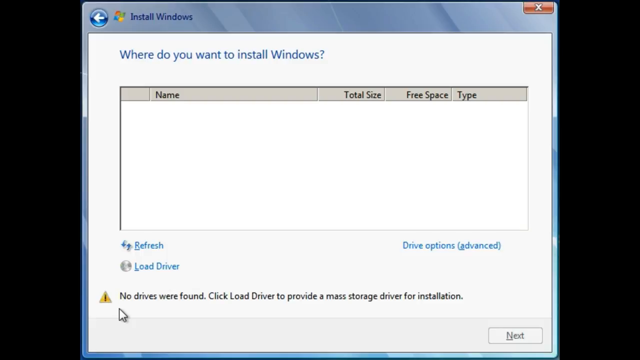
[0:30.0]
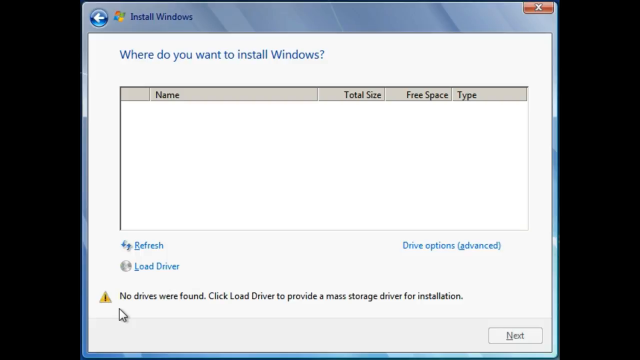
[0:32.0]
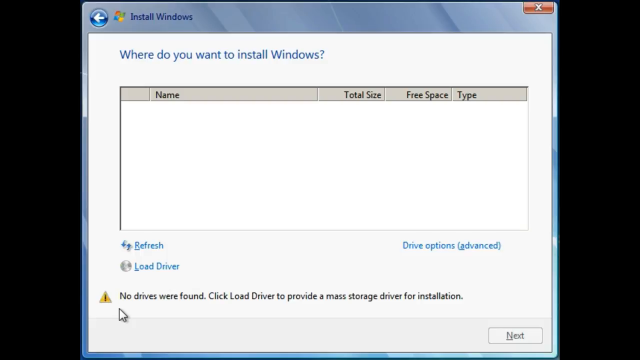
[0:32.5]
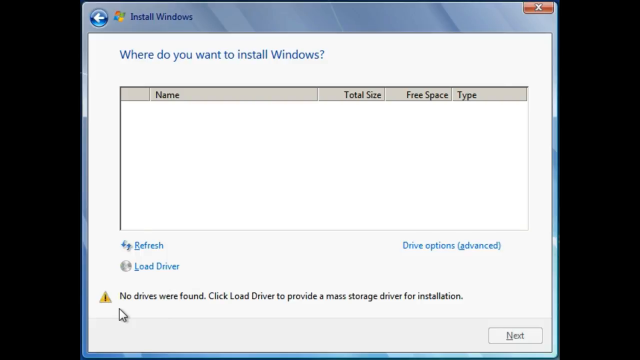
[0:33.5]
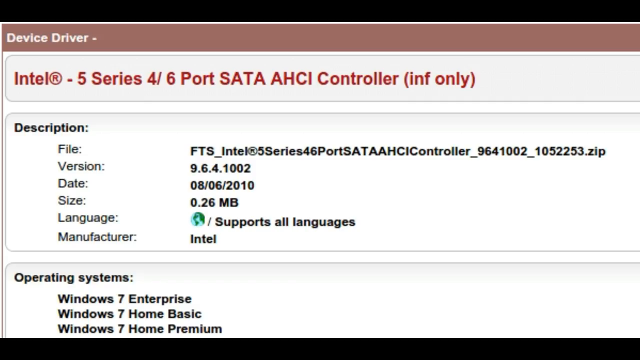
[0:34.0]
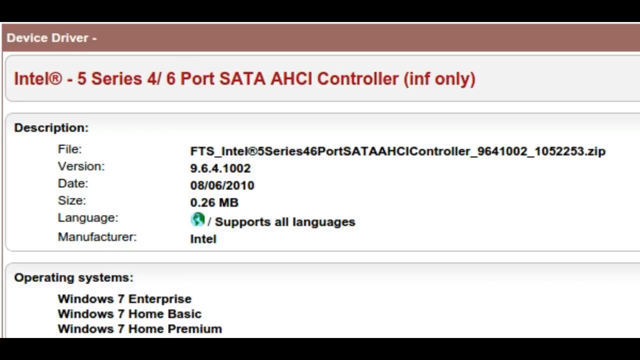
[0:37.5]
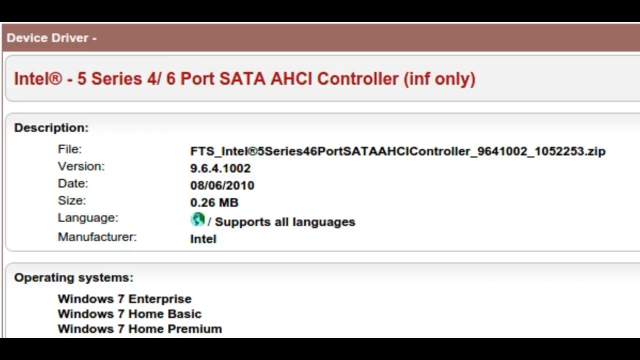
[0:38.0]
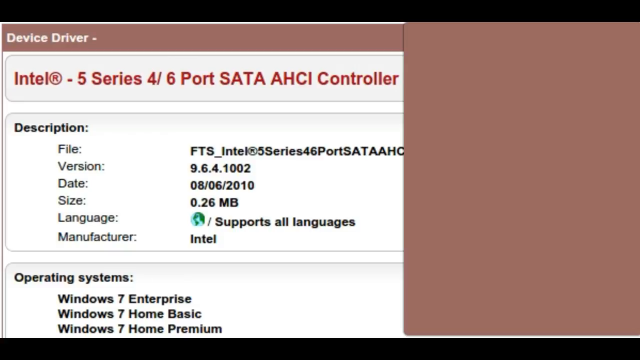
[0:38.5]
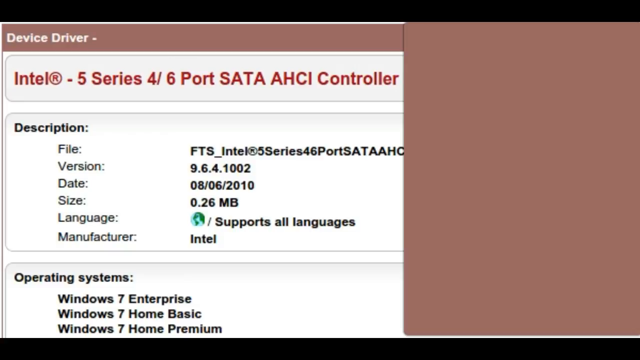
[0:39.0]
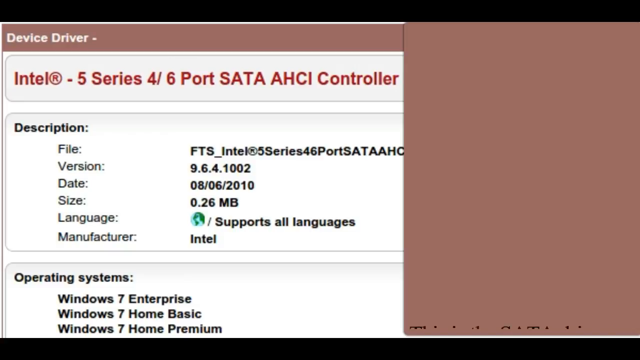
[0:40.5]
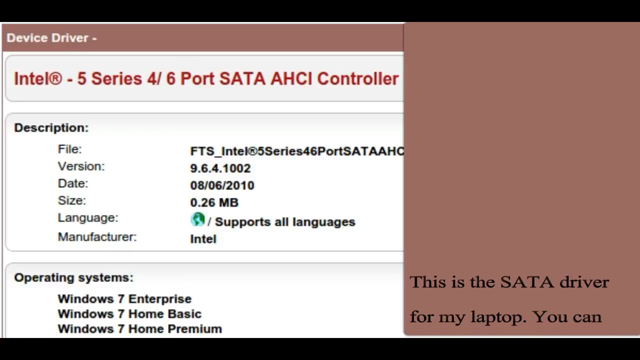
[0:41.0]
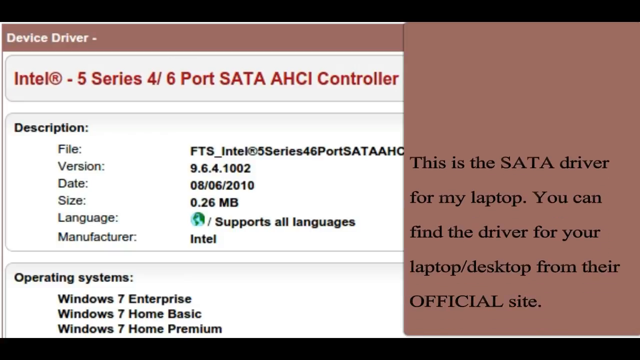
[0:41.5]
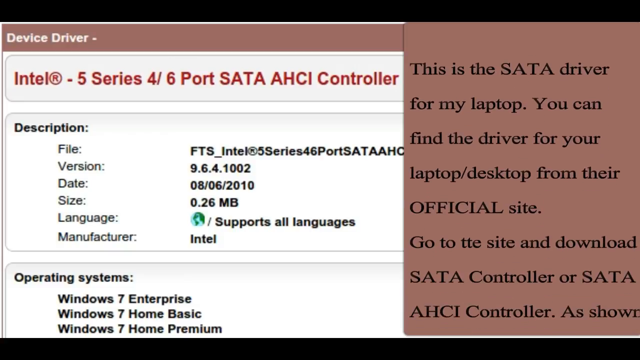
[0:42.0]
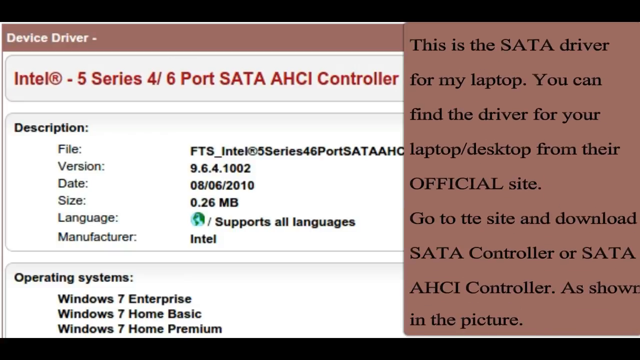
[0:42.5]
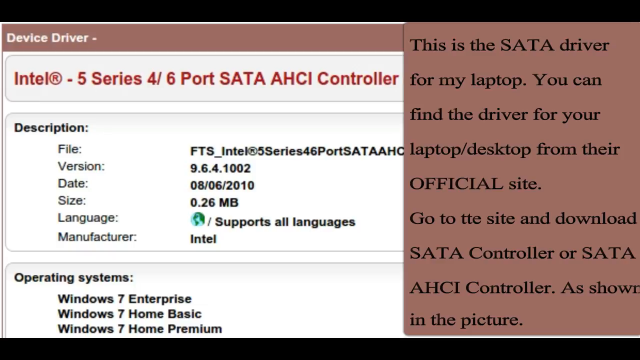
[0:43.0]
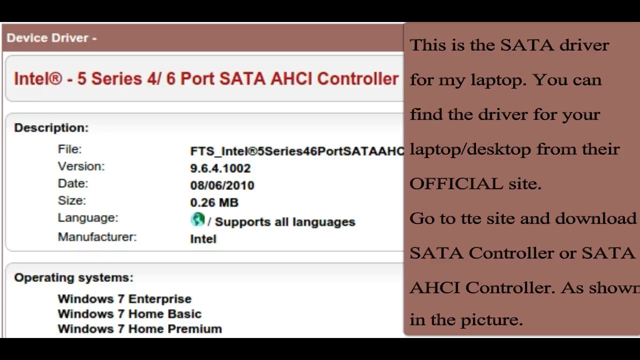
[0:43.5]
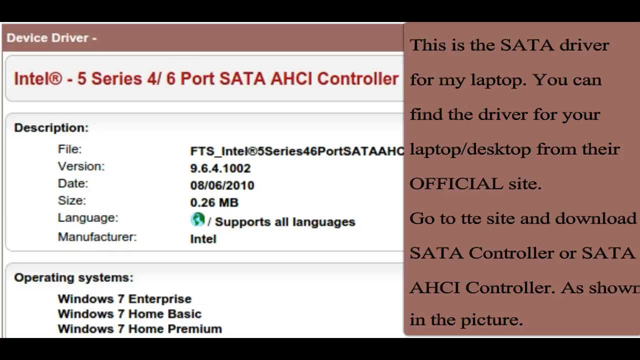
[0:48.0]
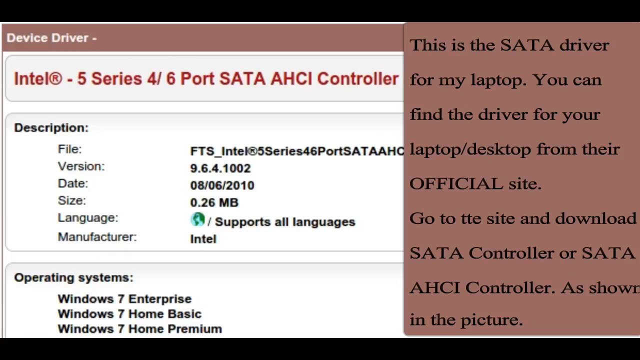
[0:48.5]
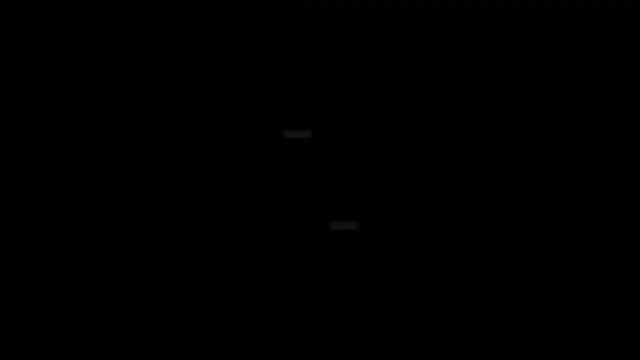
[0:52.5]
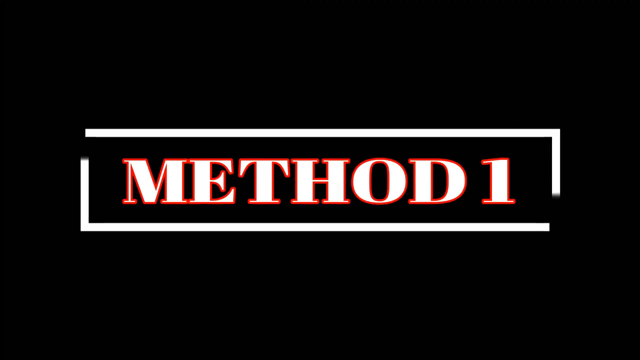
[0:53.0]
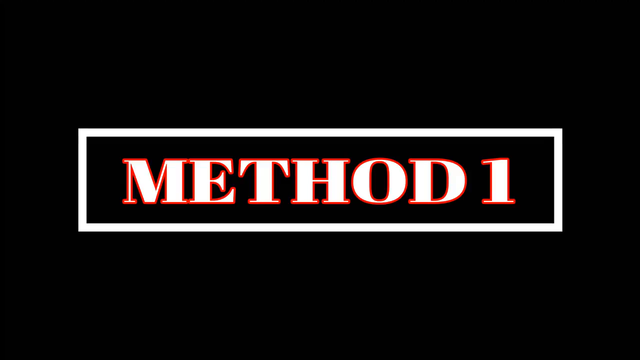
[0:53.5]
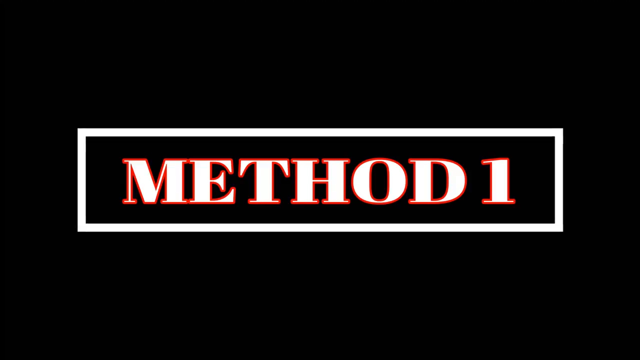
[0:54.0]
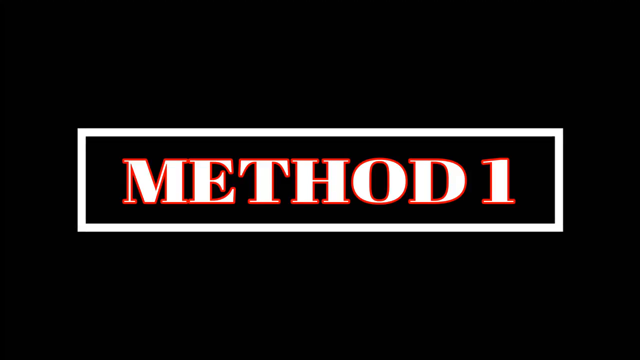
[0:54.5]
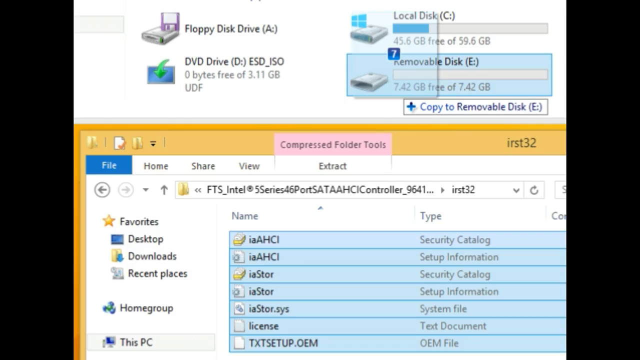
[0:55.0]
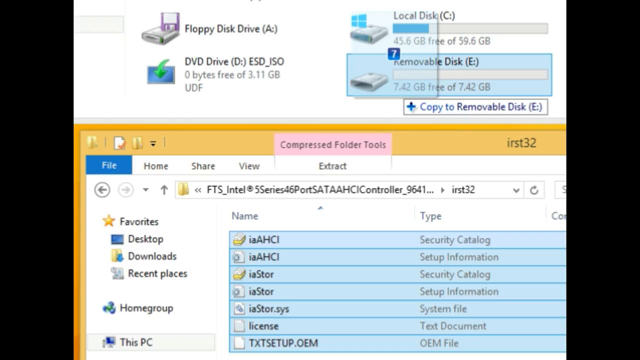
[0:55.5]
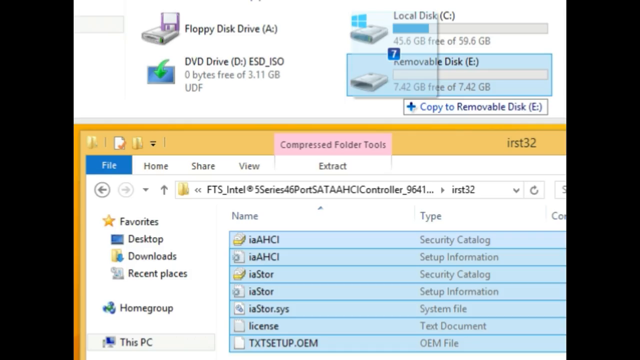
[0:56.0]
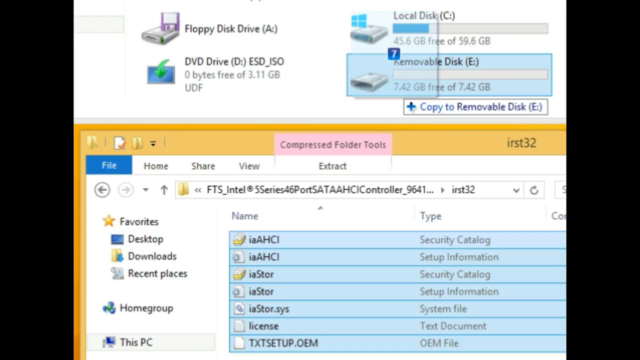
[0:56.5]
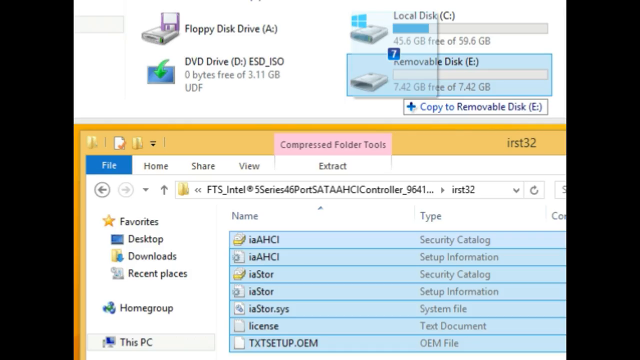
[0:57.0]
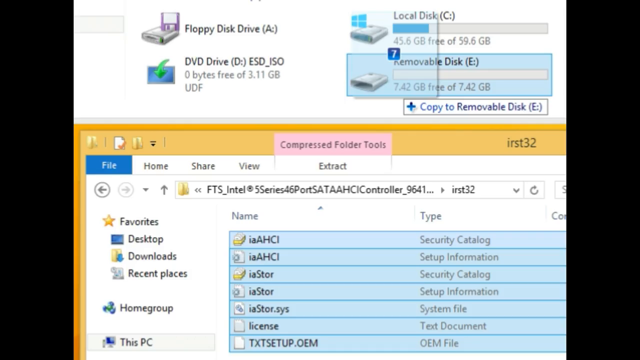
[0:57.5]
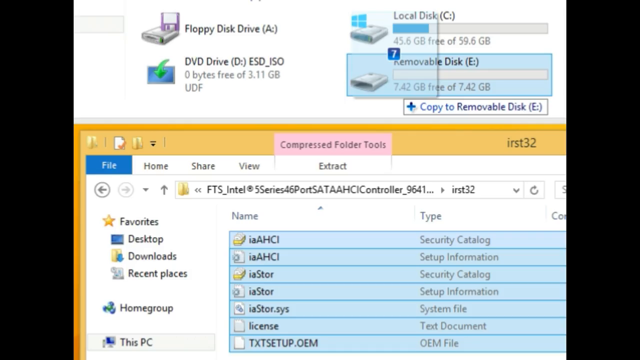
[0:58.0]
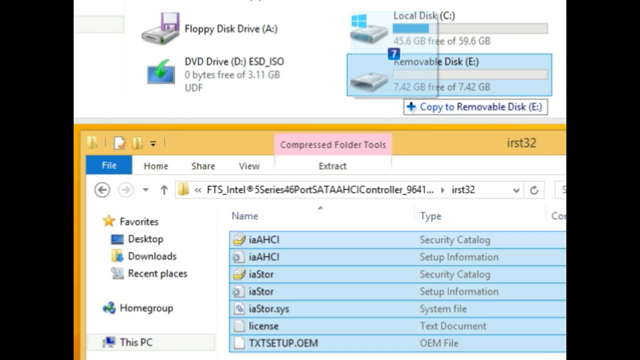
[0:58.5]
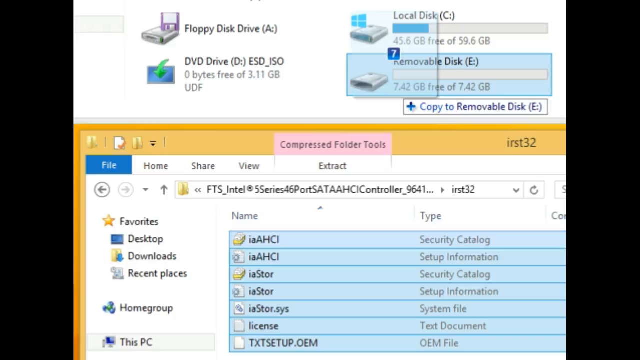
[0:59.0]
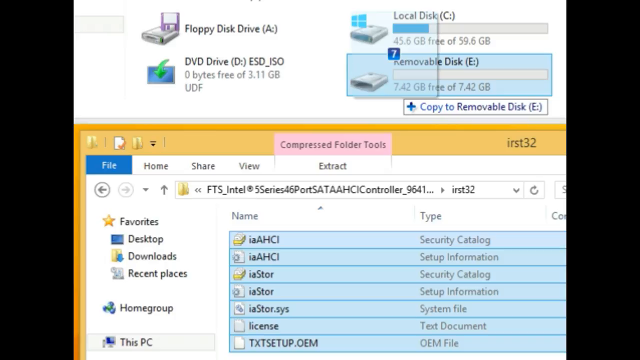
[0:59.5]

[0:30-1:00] A computer screenshot is placed on a black background. It is a window from the Windows system: a dialog box asking "where do you want to install Windows". This screenshot disappears and a new one appears, showing a screen grab for a device driver. A light brown text box is then overlaid on the right side of the screen, taking up about 30% of it. Text appears from the bottom and slowly loads upwards until it fills the box, reading "this is the SATA driver for my laptop. You can find the driver for your laptop/desktop from their official site." and continuing with an instruction to "download SATA controller or SATA AHCI controller as shown in the picture." The screen then transitions to a black background with a box in the centre that says "method one". A different screenshot then loads, split into two halves, each showing a different window: one shows the user's local drives, and the one at the bottom shows an opened list of files in Windows Explorer.